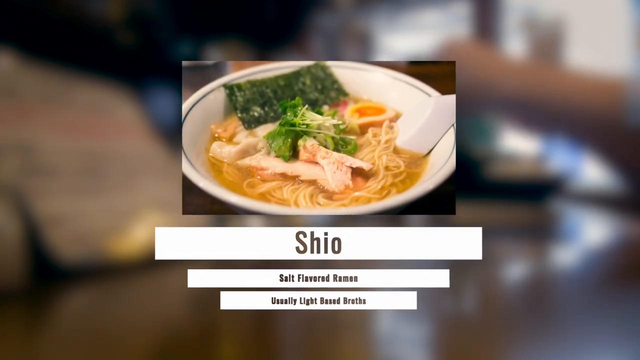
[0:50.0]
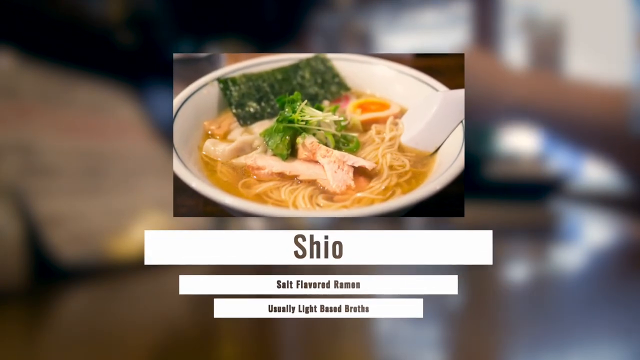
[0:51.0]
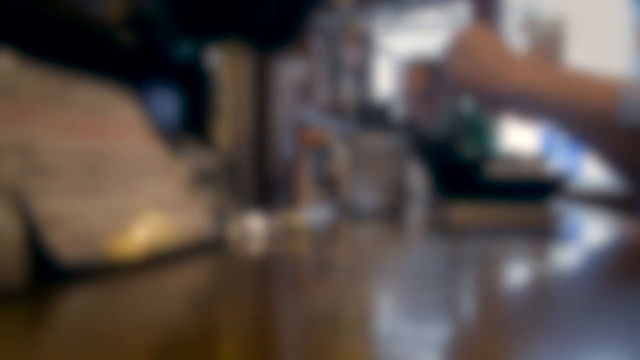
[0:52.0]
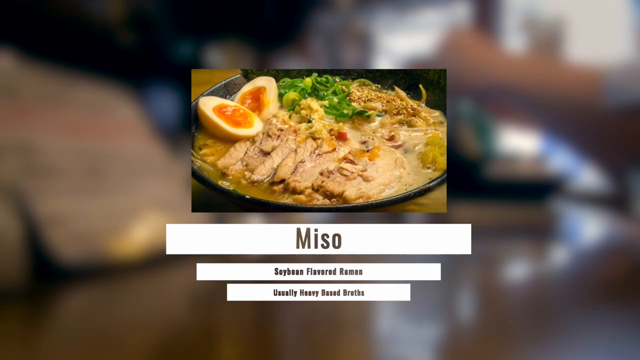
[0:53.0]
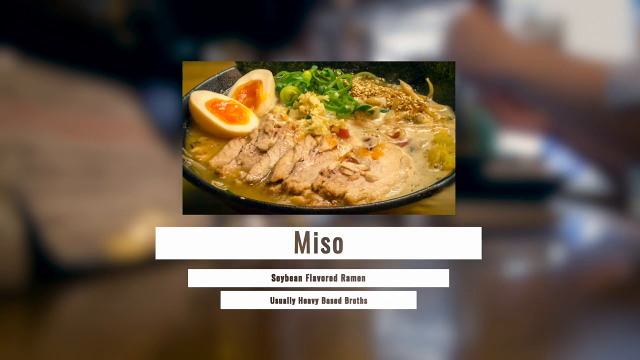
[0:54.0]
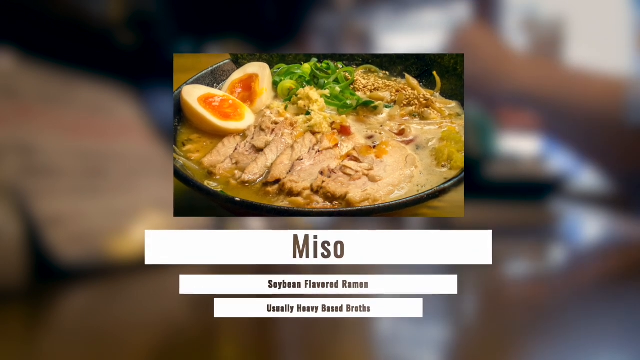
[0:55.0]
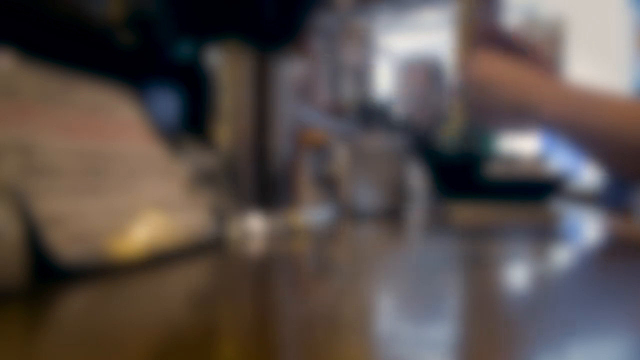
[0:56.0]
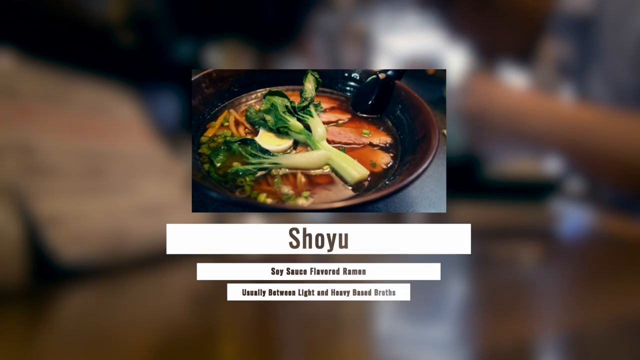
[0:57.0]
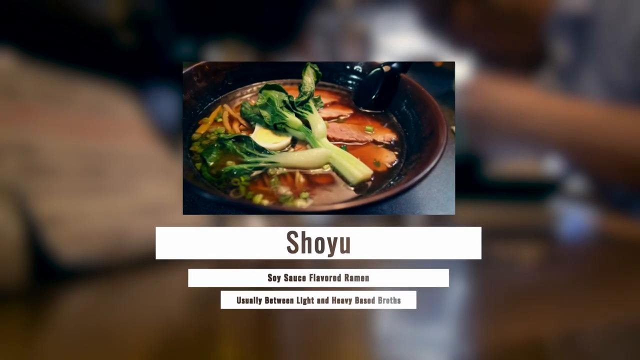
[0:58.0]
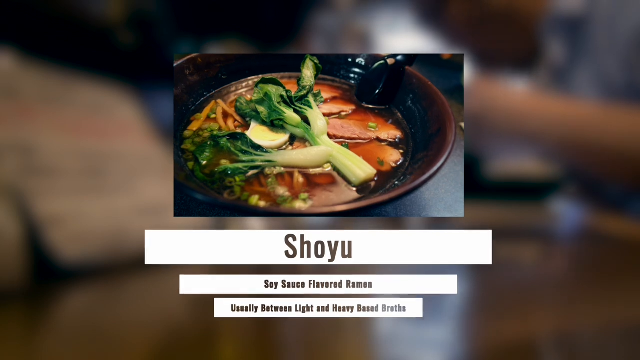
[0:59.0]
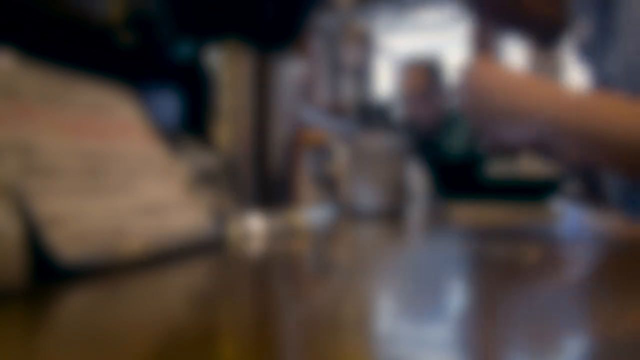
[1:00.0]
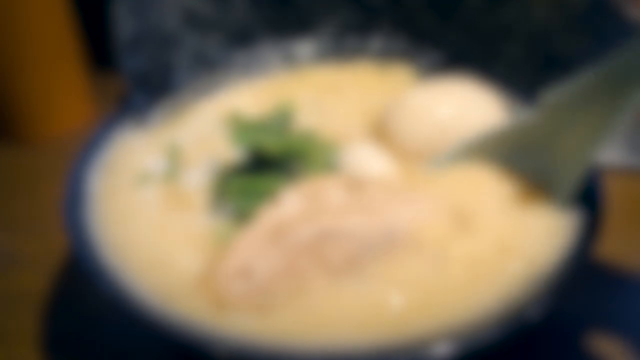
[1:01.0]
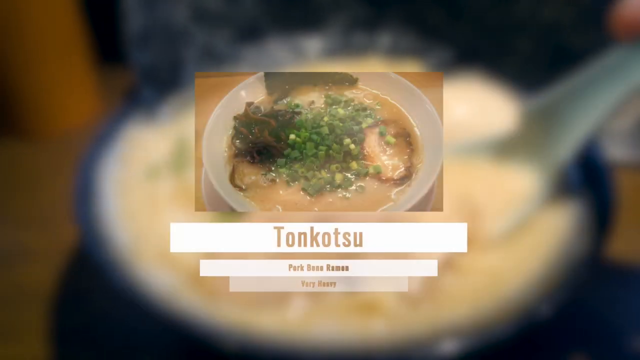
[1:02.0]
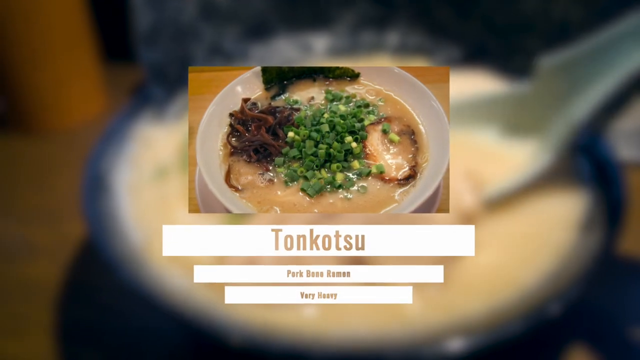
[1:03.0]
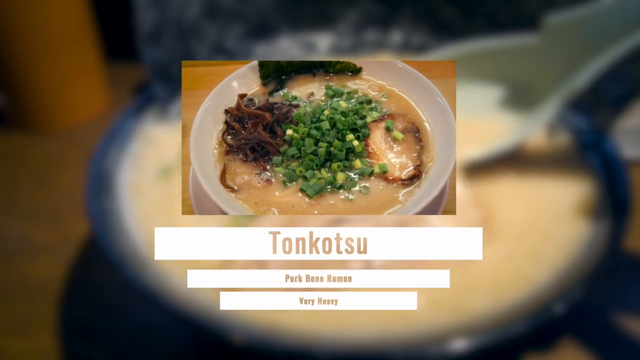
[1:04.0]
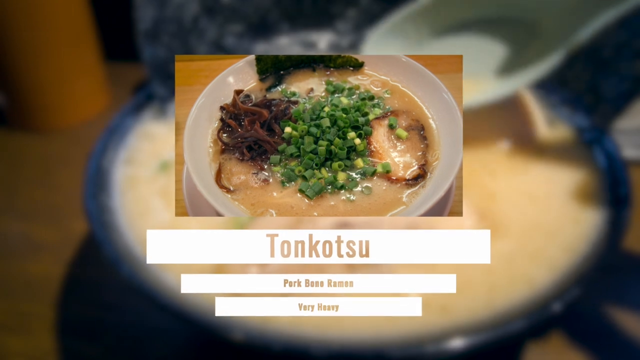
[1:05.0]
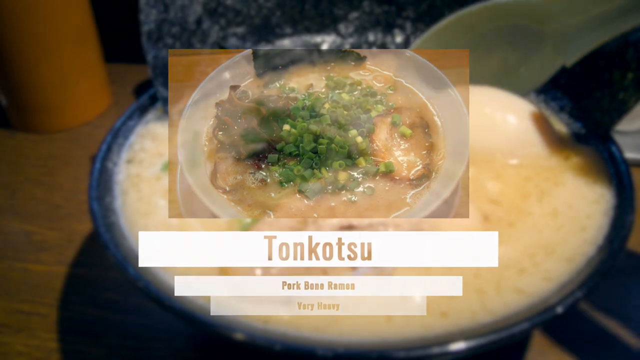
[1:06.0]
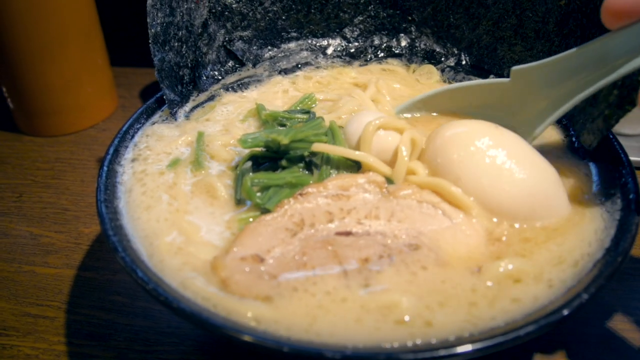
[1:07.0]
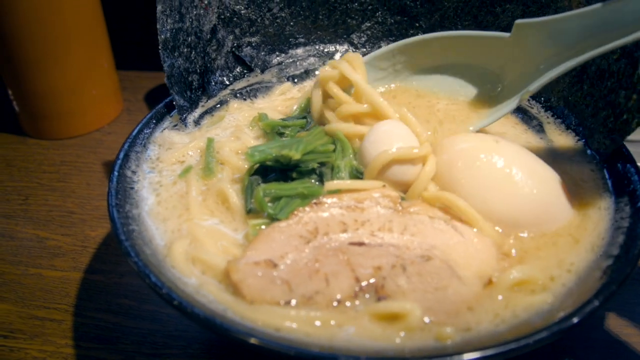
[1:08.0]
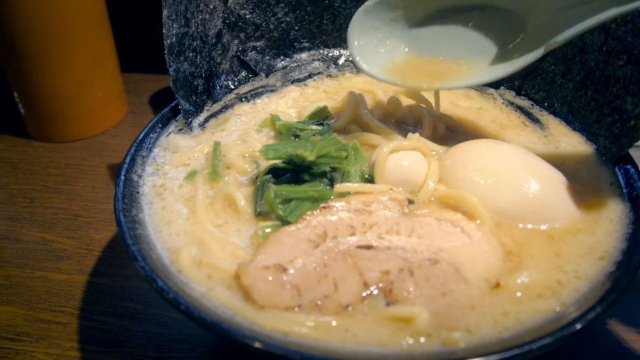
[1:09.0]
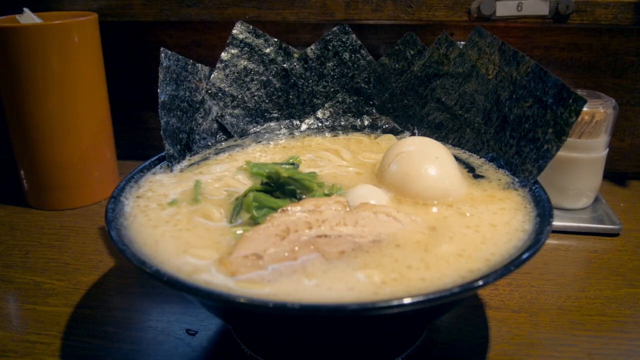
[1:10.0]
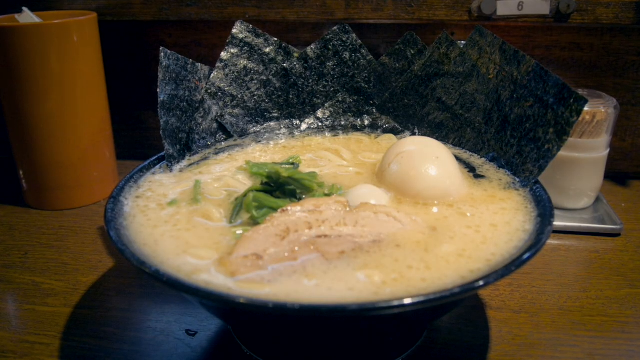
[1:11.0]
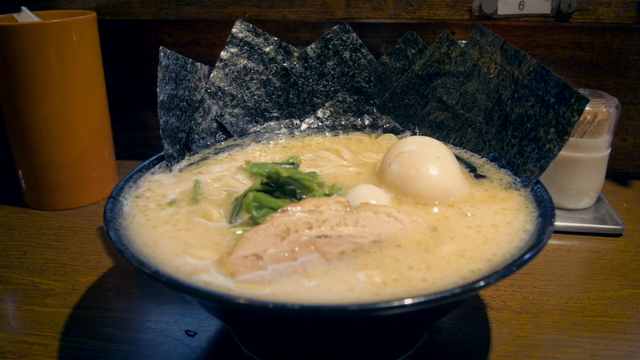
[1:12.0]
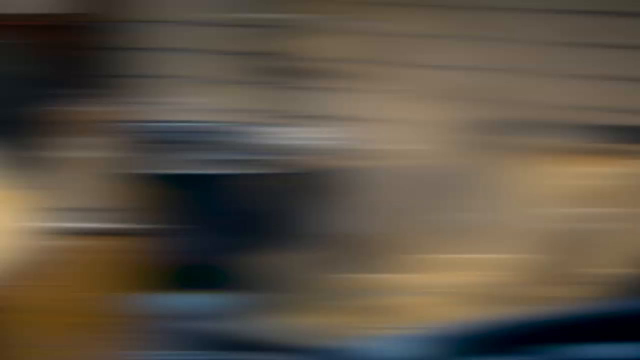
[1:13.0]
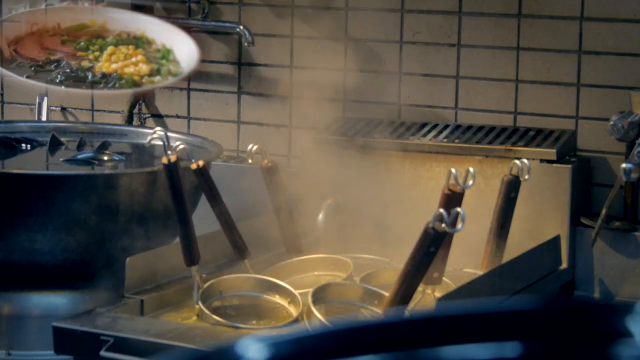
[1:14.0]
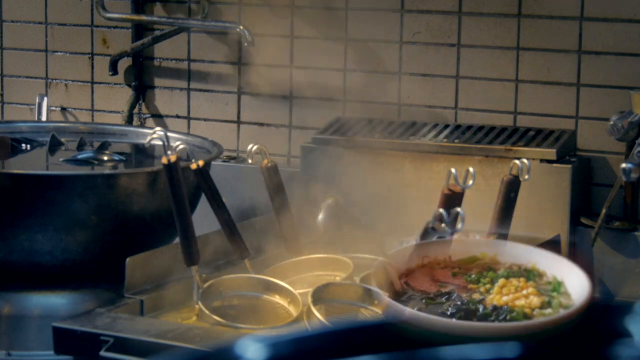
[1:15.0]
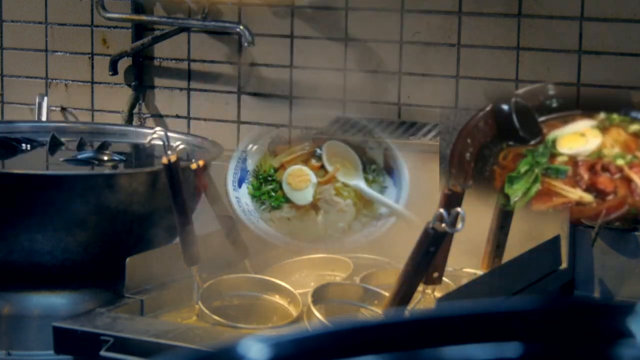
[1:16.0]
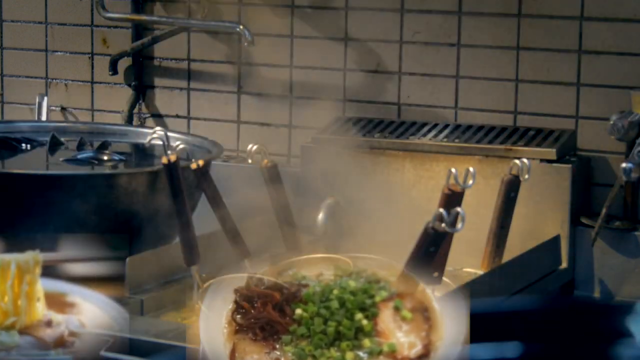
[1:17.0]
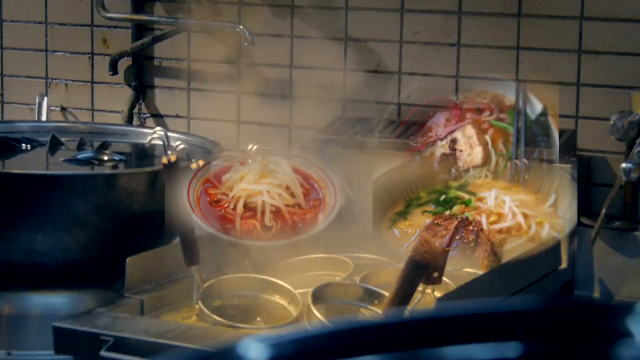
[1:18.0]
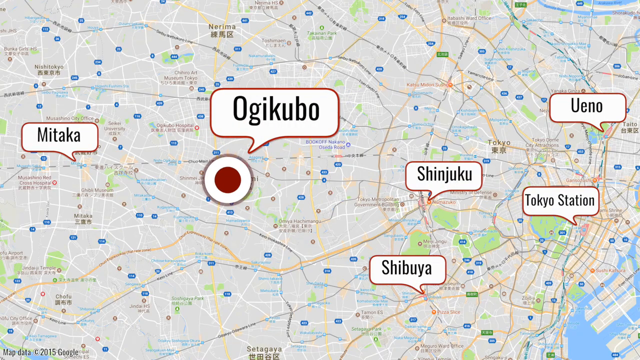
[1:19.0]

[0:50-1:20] Shio appears on the screen, then miso, a soybean-flavoured ramen with a heavy broth, shown in an image of a bowl of miso ramen. The video switches to tonkotsu ramen, a heavy pork-based ramen. The image shows pork, spring onions and another ingredient in a white, very colourful bowl, with seaweed lining the edges of the bowl, an egg and meat inside, and some green vegetable in the middle. In the background, a person is scooping a bowl of ramen noodles around. Next comes an image of a kitchen with images of ramen flying all over the screen. Finally the video switches to a map showing multiple locations in Japan, labeled "Mitaka" and "Ogikubo."